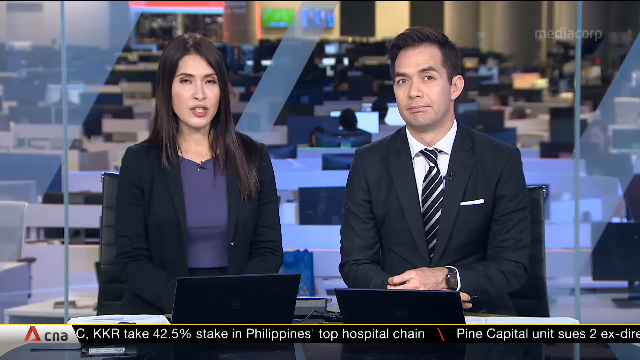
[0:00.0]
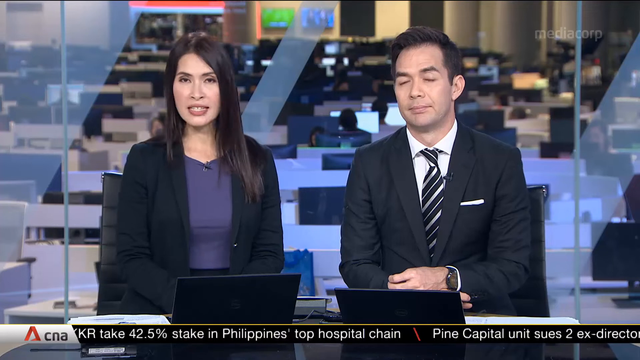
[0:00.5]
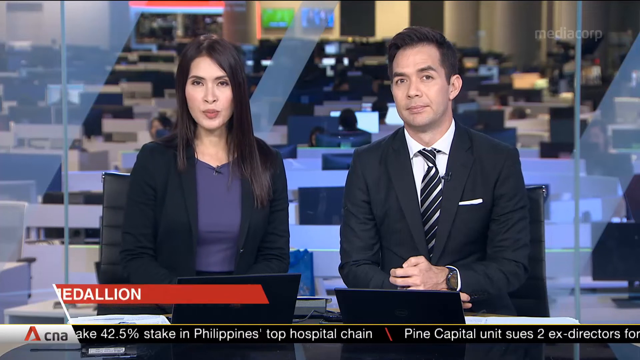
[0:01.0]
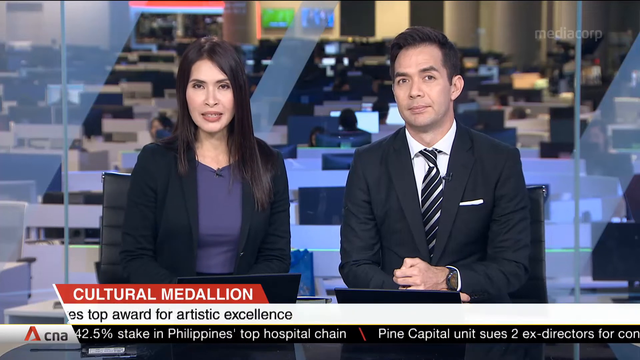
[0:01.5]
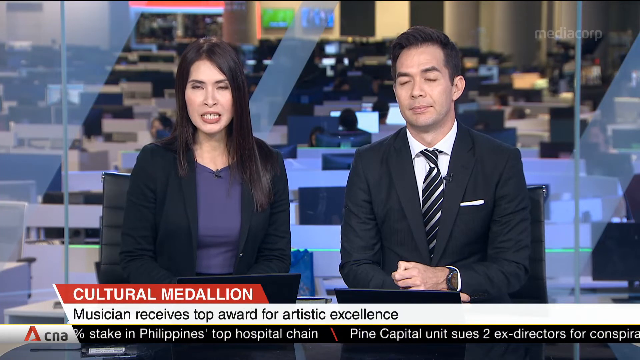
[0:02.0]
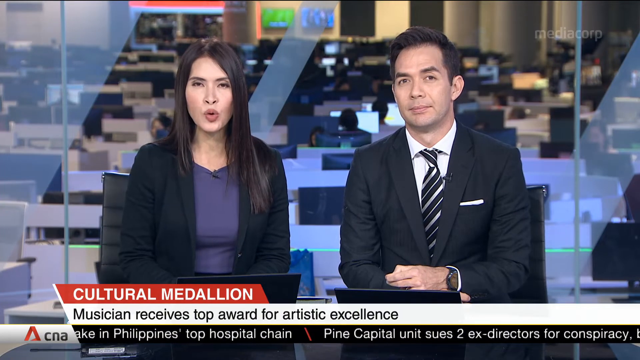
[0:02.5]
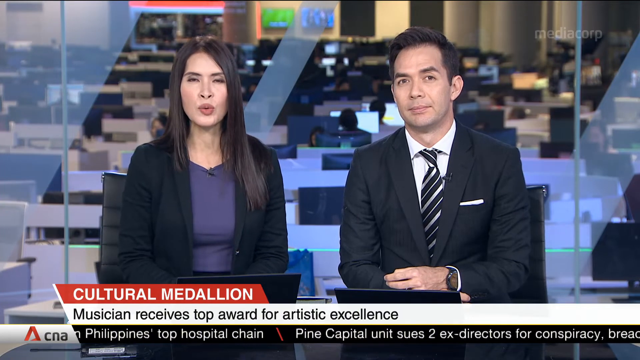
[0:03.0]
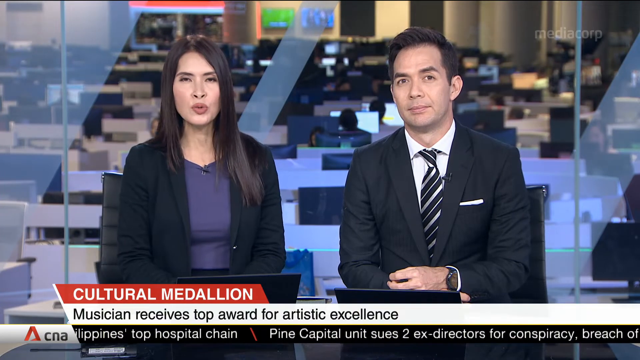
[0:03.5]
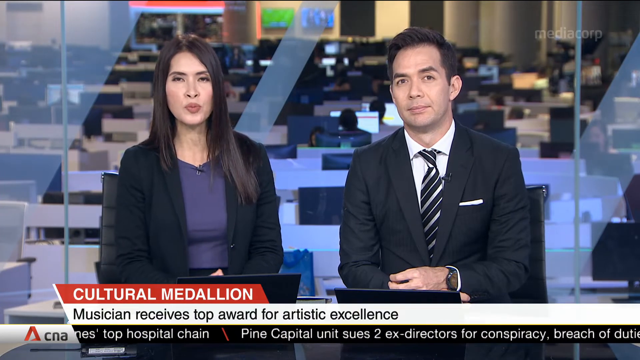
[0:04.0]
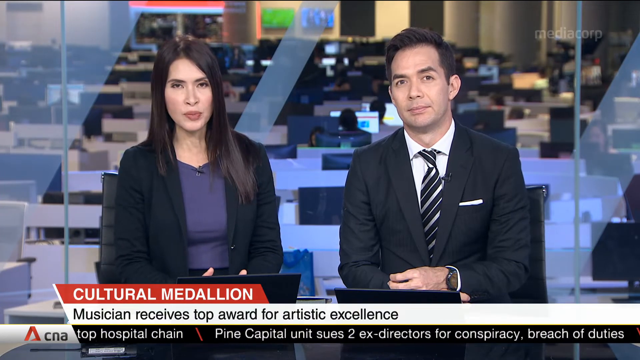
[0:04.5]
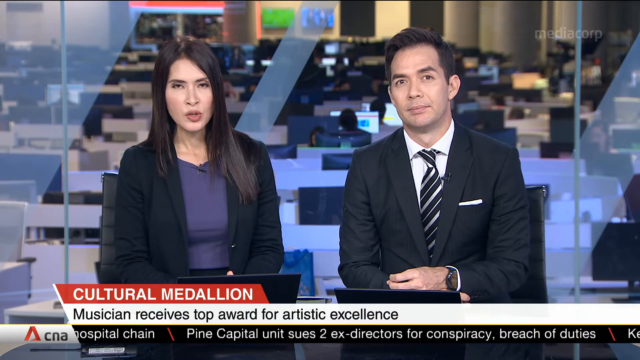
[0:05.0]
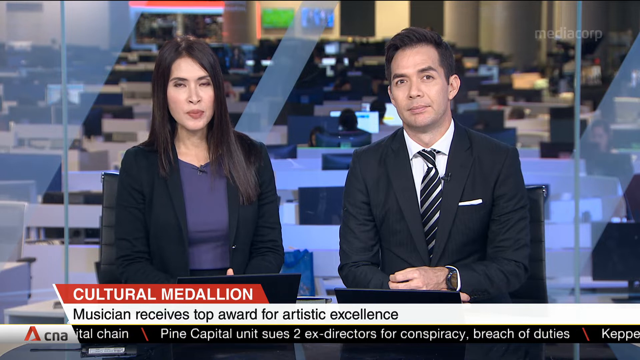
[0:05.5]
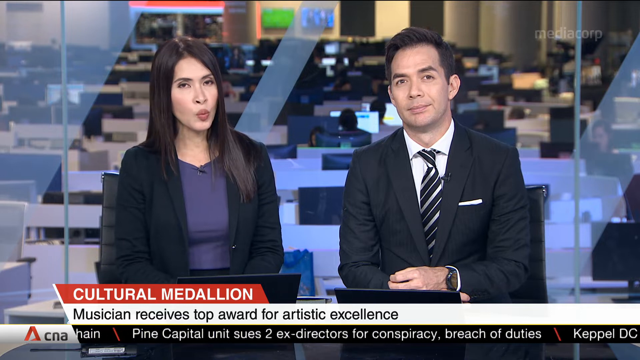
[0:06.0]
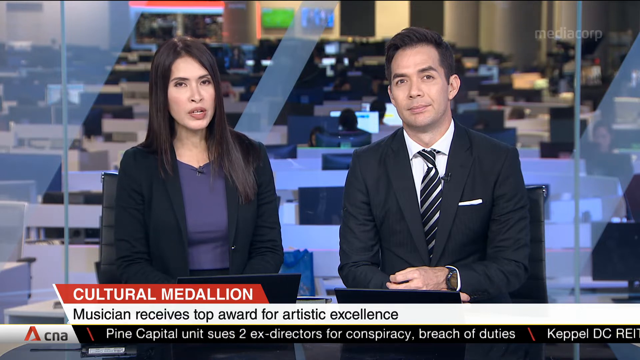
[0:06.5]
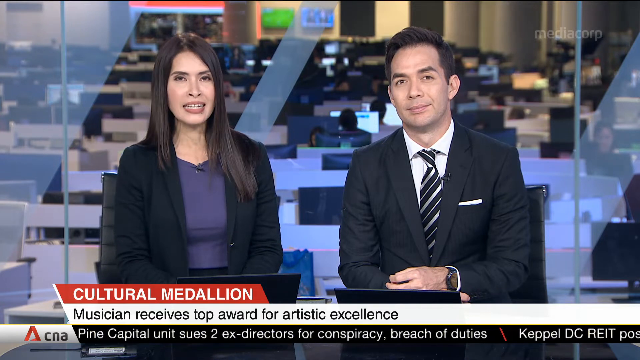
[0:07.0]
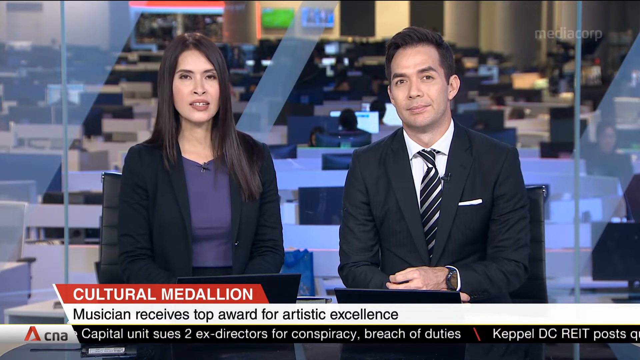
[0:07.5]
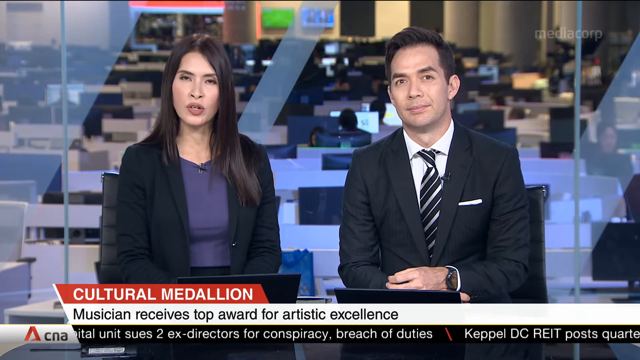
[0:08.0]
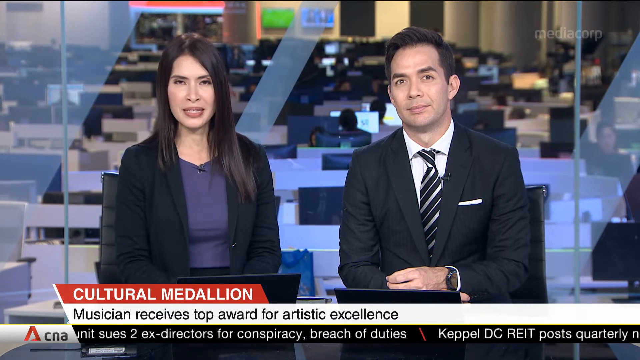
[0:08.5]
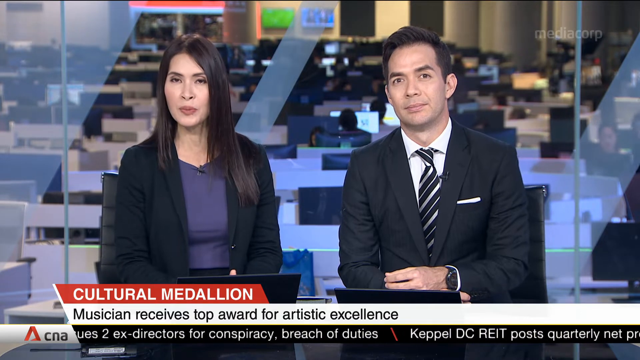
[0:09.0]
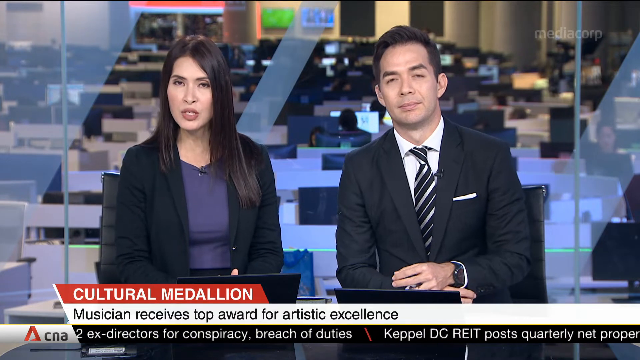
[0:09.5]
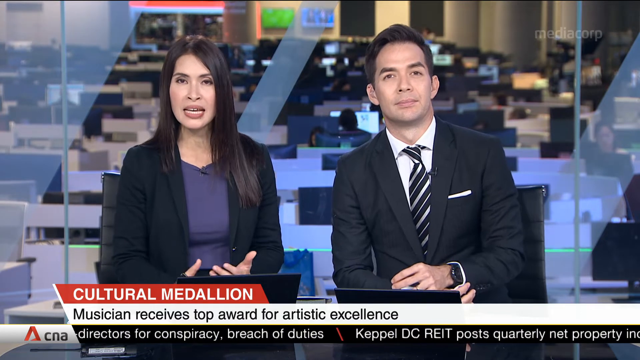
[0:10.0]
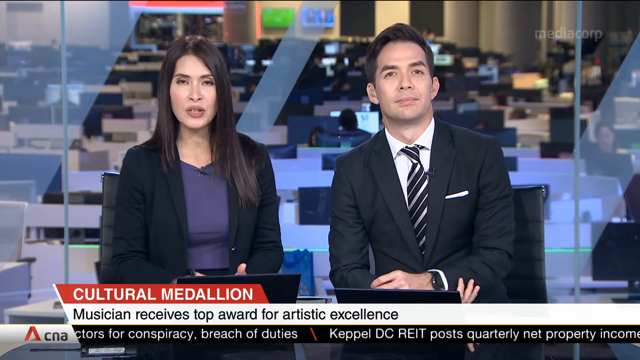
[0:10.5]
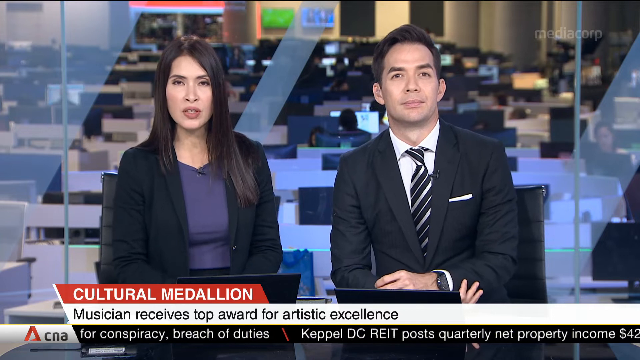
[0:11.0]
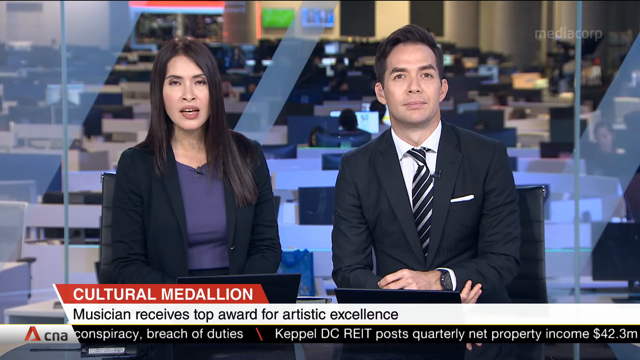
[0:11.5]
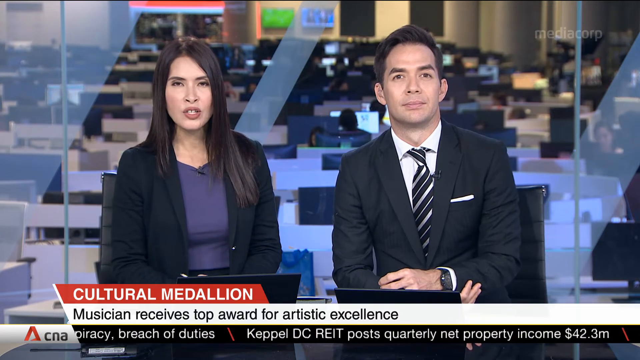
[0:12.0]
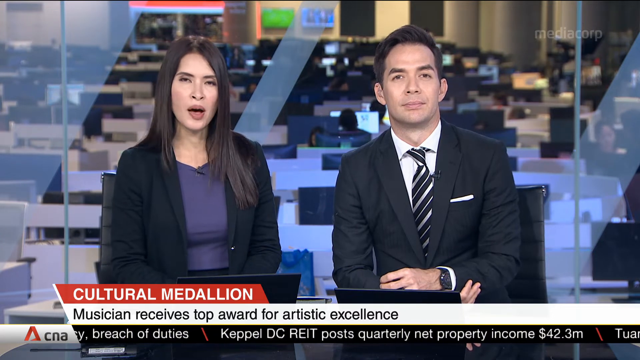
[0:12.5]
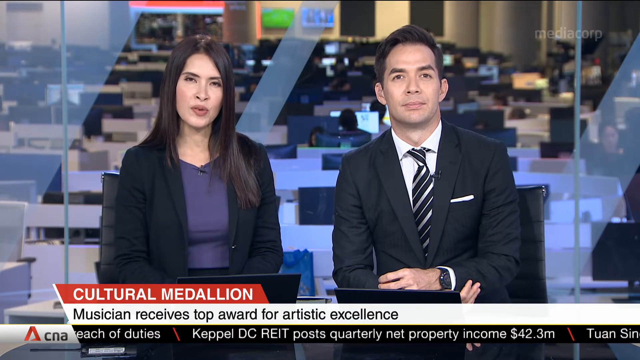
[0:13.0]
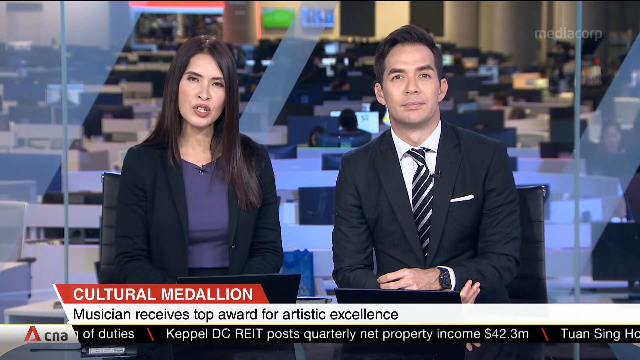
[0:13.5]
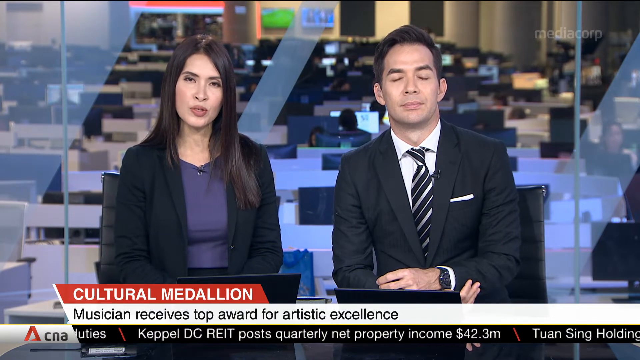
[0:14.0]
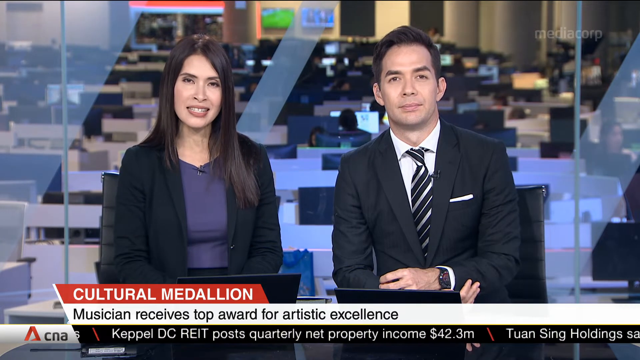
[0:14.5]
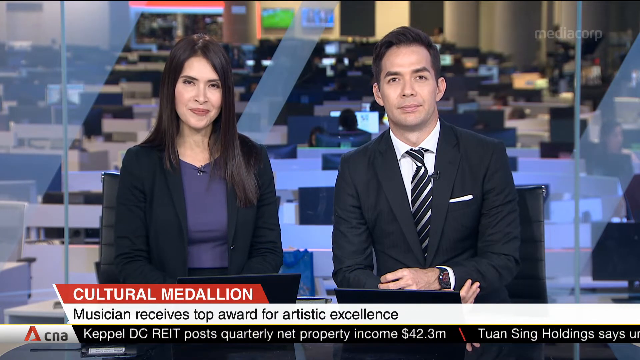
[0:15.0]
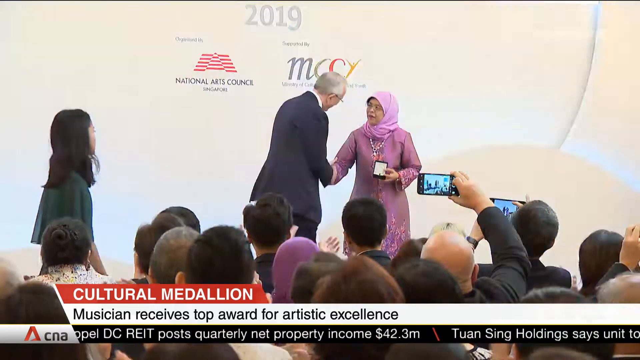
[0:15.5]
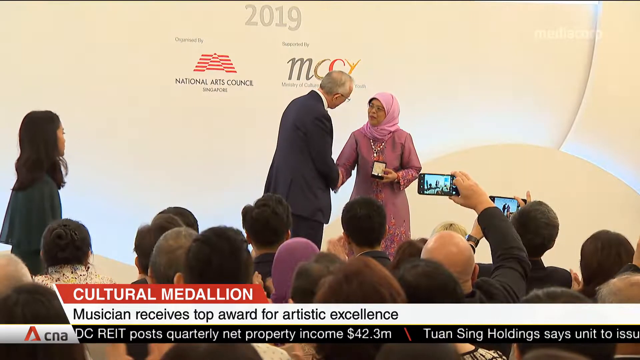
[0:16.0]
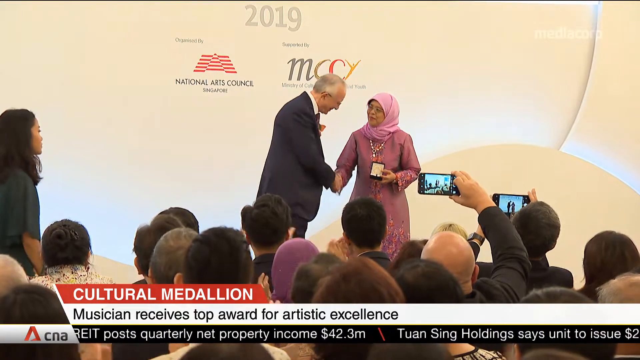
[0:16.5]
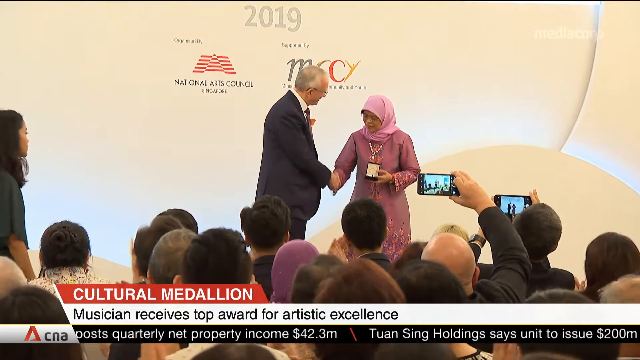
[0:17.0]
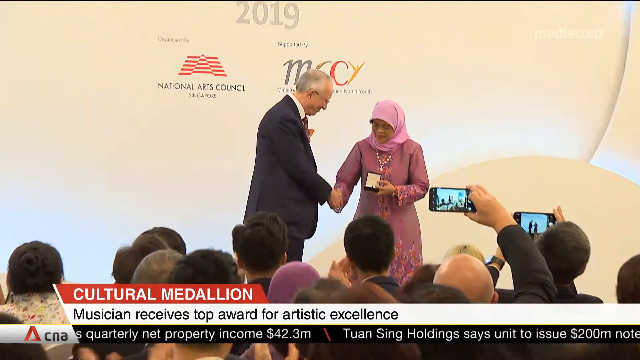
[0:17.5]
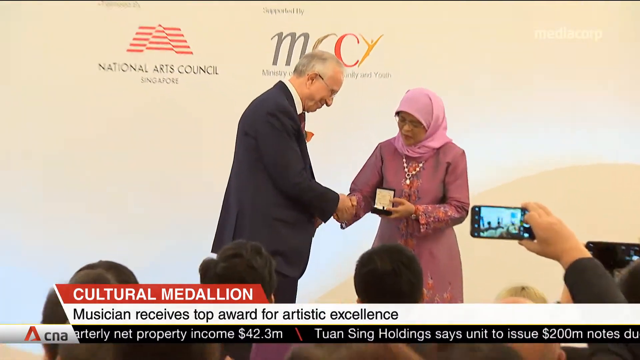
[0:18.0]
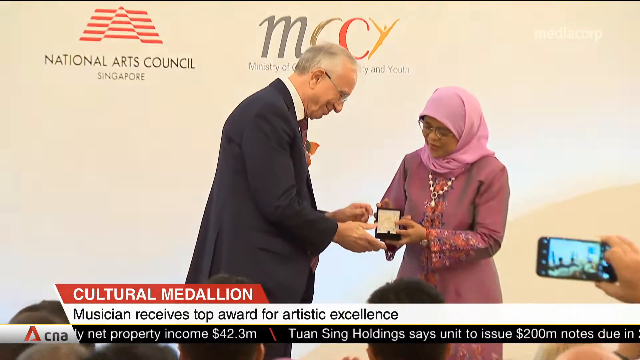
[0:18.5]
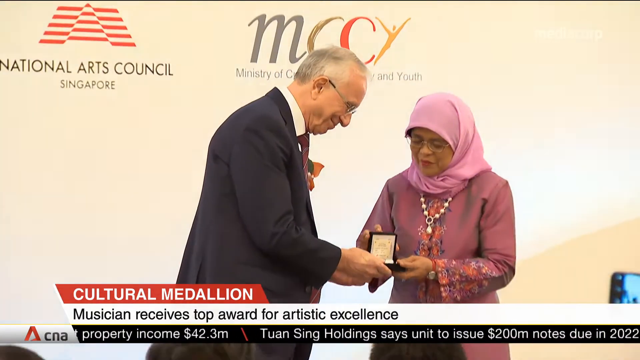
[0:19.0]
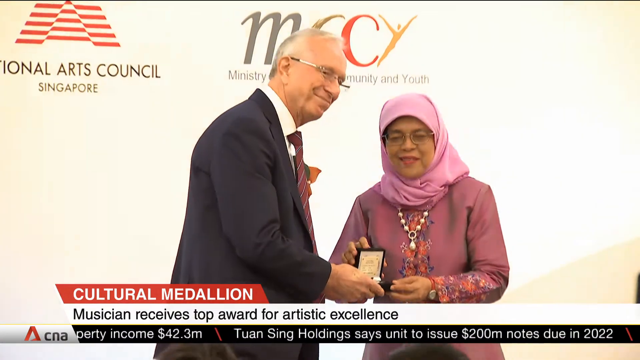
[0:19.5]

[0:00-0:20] This appears to be a news story. It opens with a shot of two anchors. On the left is a woman with straight, long brown hair, wearing a black blazer and a purplish gray top. On the right is a man with brown hair and brown eyes, wearing a dark gray suit jacket. A logo in the bottom left reads "CNA." The video then cuts to footage of what looks like an awards ceremony. Logos in the background read "National Arts Council Singapore" and "Ministry of Community and Youth," along with another "Ministry of" whose full name is blocked by a person's head. A woman wearing a mauve-colored dress and a pink headscarf and an elderly gentleman in a dark gray suit are looking at an award in a little box.